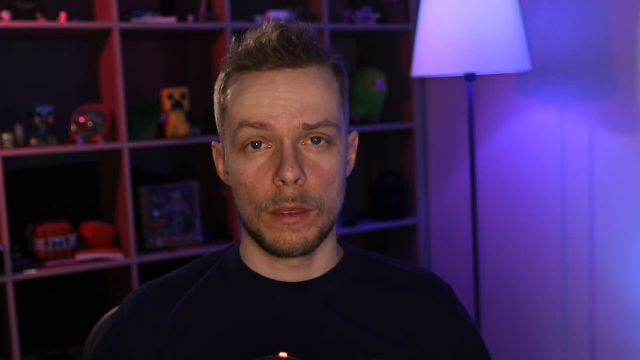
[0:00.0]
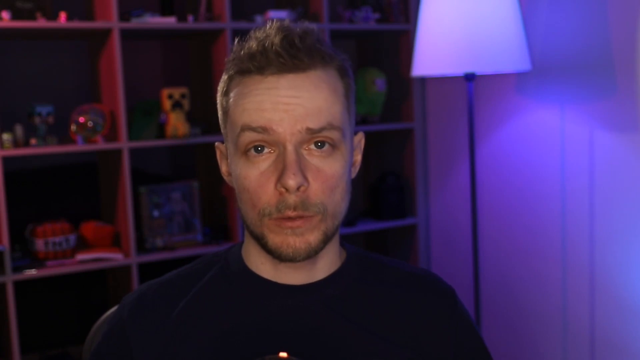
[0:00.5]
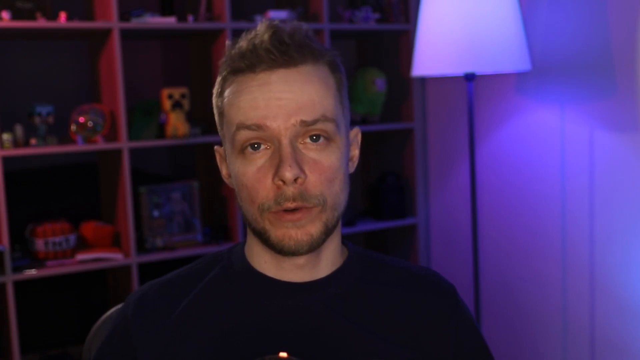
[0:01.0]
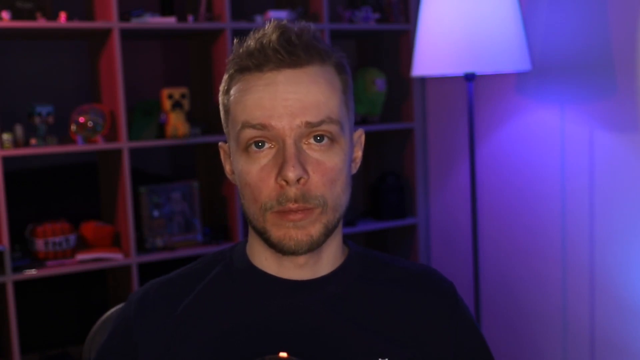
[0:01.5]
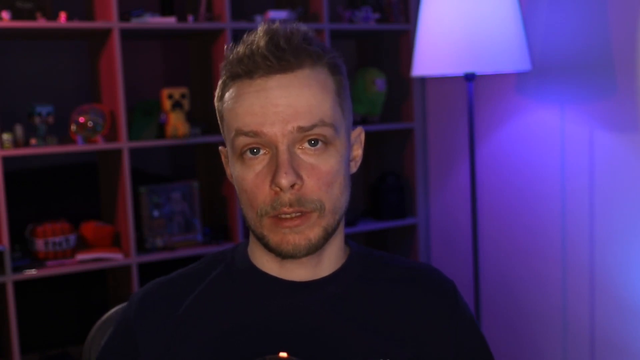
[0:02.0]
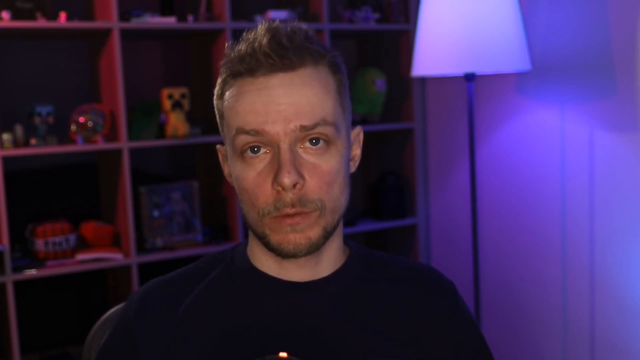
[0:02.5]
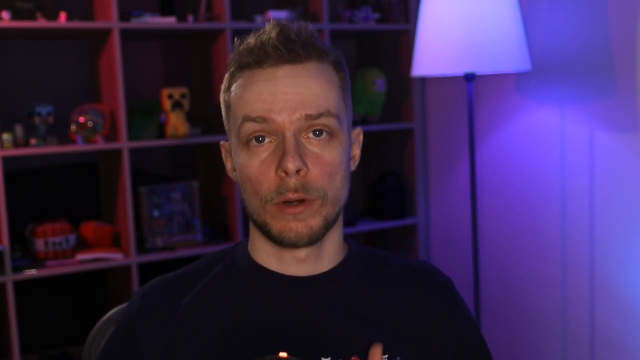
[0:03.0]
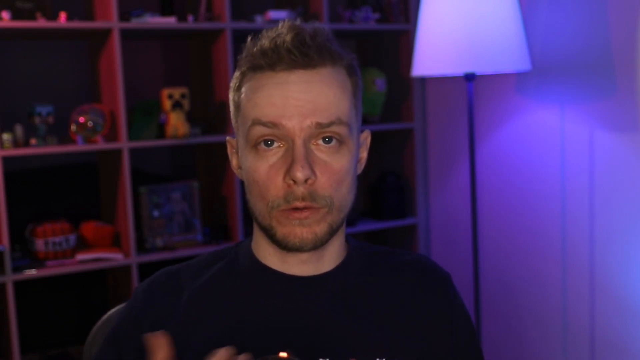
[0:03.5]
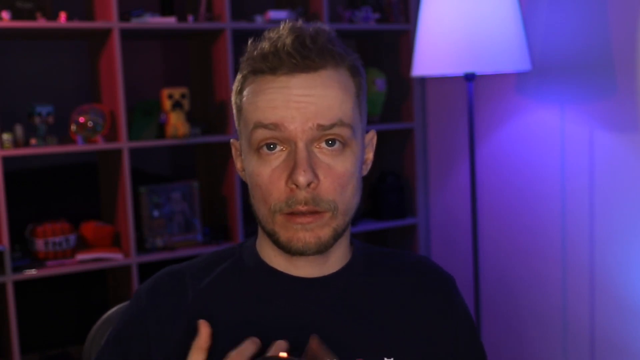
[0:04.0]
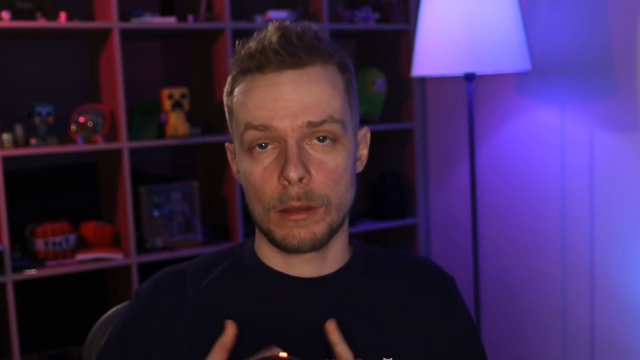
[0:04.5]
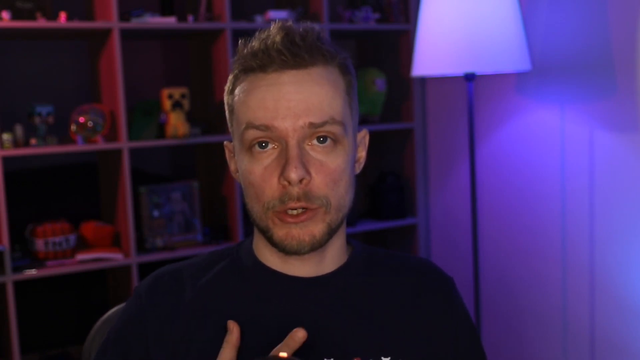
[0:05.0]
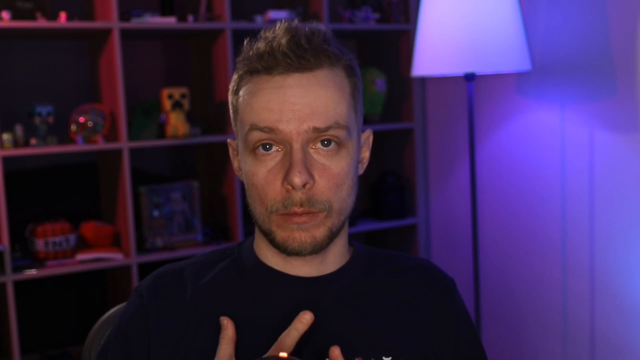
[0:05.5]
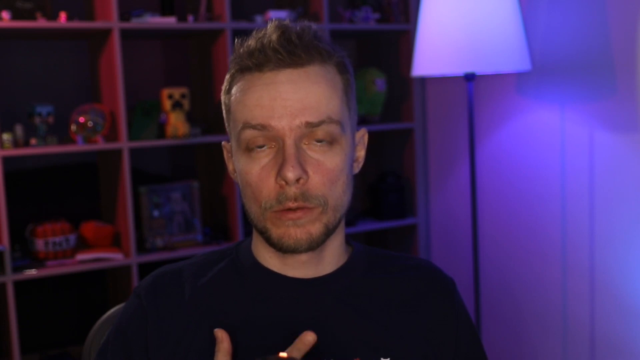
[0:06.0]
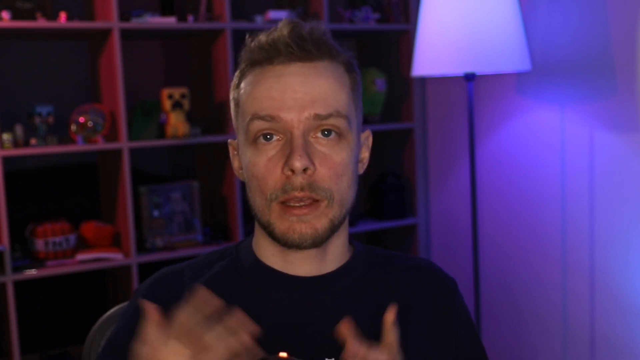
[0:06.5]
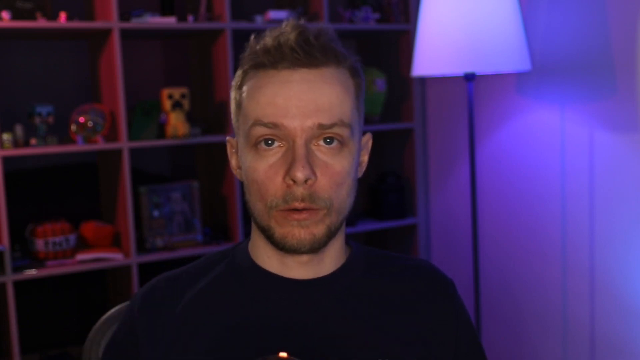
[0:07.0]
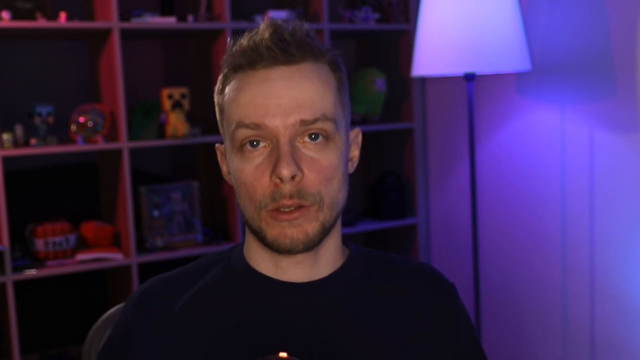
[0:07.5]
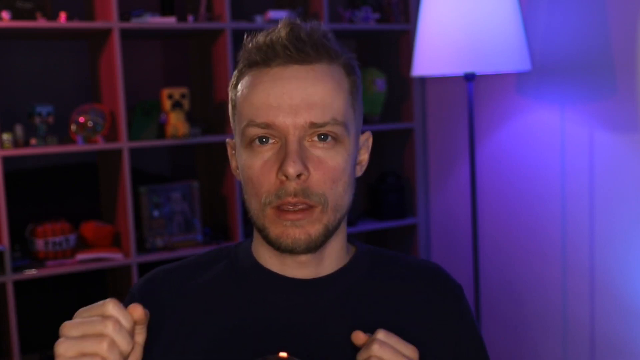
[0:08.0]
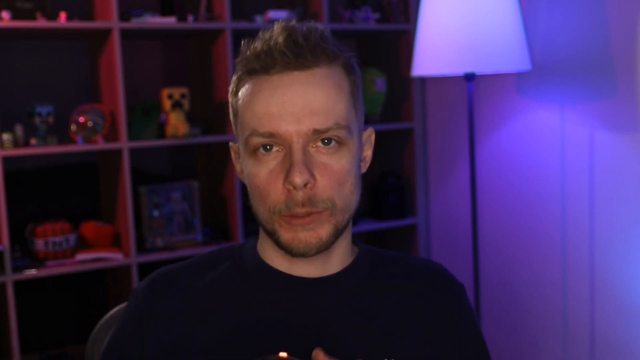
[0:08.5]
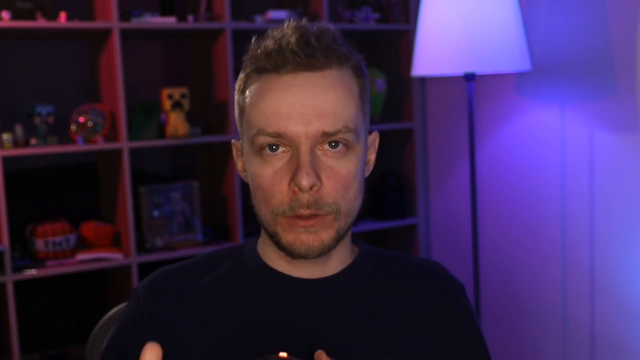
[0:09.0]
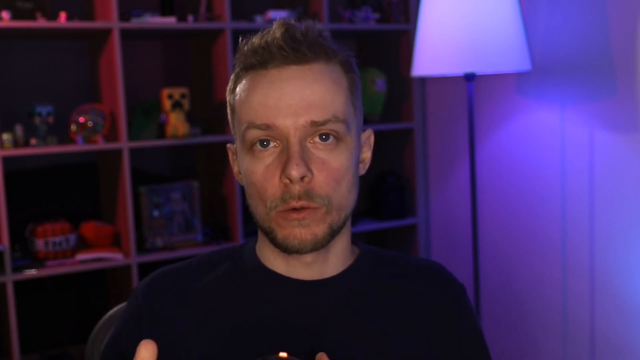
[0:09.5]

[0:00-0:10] A man talks to the camera. He wears a navy blue t-shirt and has spiked-up brown hair. Behind him is a large shelving unit with at least 16 individual shelves holding a variety of items, including a yellow Minecraft character and a green Among Us character behind his head. A lamp with a thin vertical black pole and a white lampshade in the background casts a shadow on the wall behind to the right; the wall could be white but looks purple because of the lighting. The man maintains direct contact with the camera as he talks, and the fingers of both hands occasionally pop into the bottom of the frame as he gestures, fingers spread. He then holds his fists together as he talks, opens both hands at the same time, and moves them slightly up and down and over to his right-hand side.